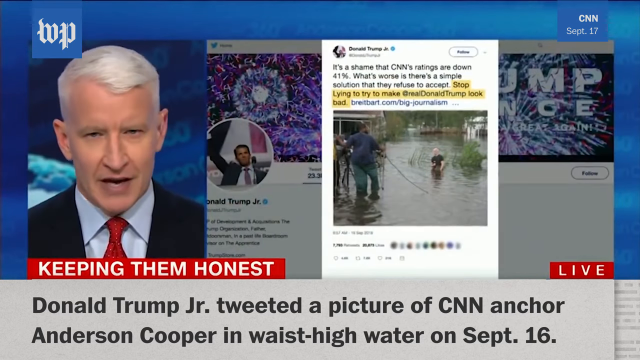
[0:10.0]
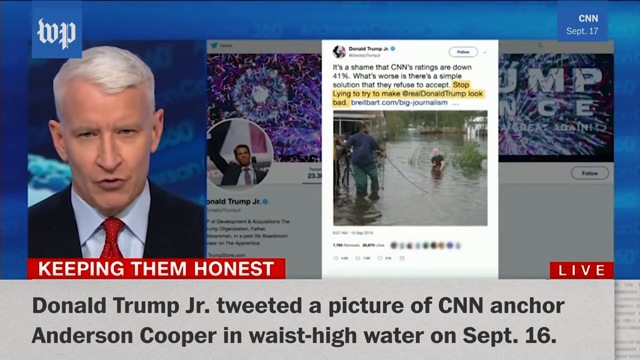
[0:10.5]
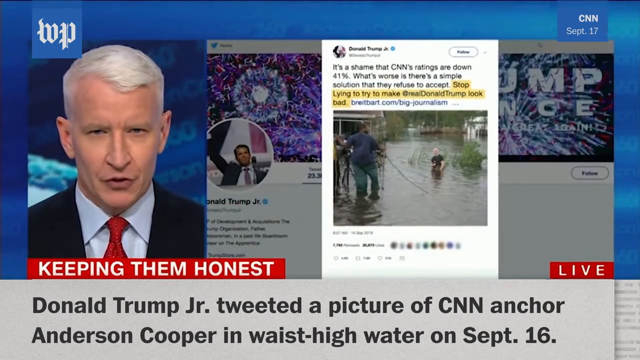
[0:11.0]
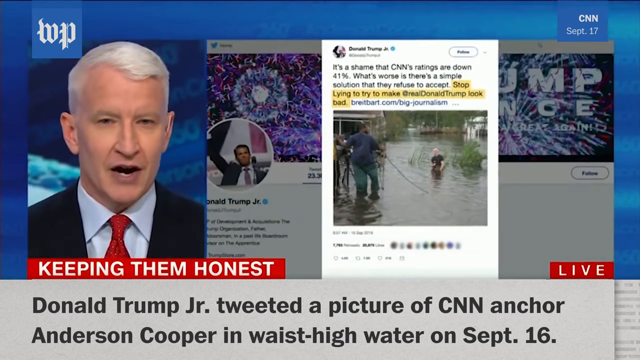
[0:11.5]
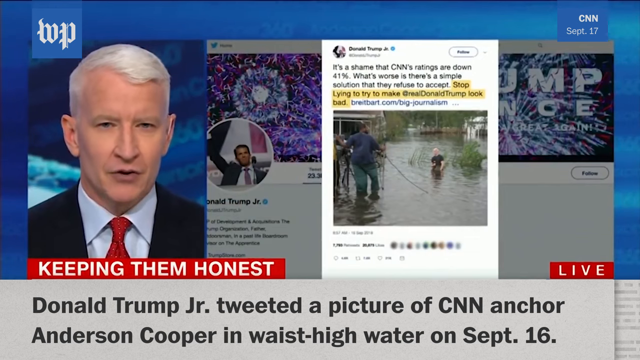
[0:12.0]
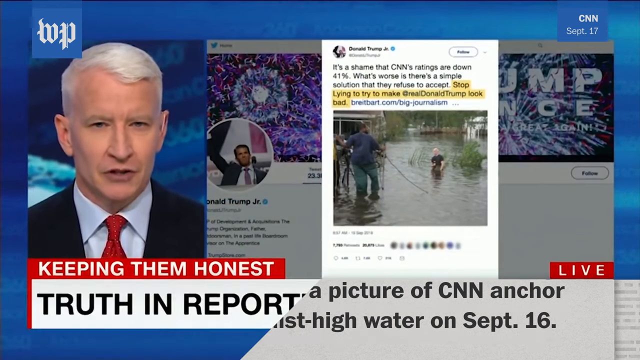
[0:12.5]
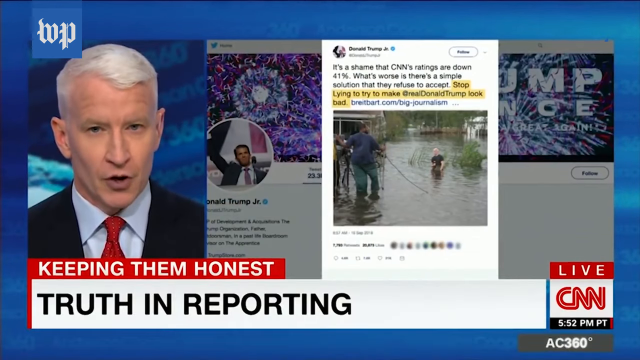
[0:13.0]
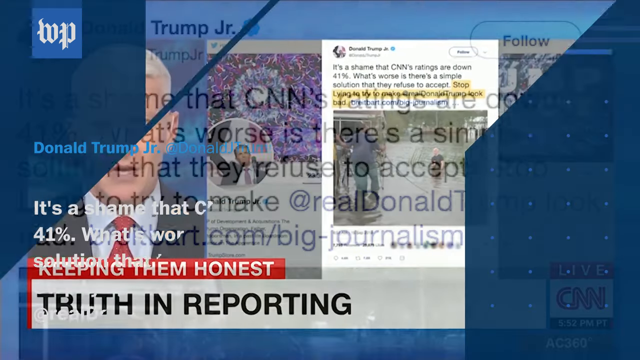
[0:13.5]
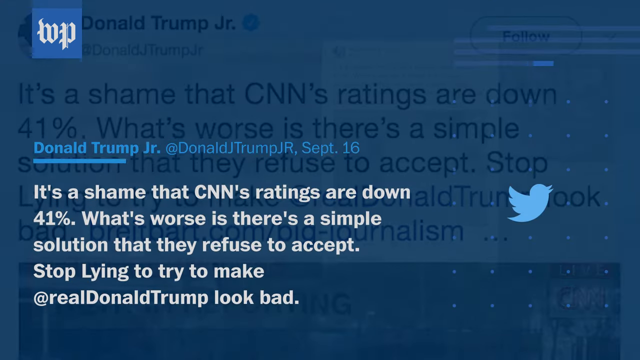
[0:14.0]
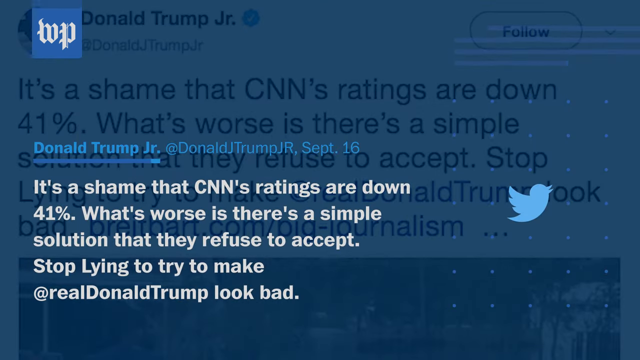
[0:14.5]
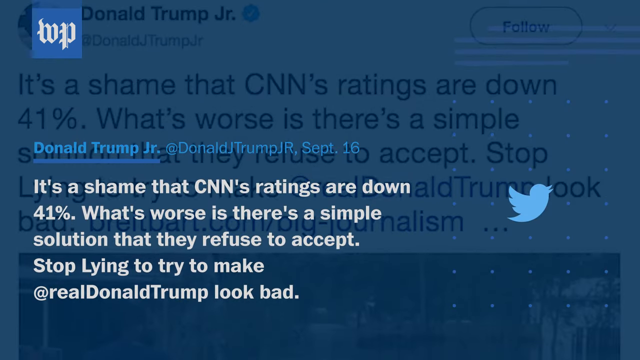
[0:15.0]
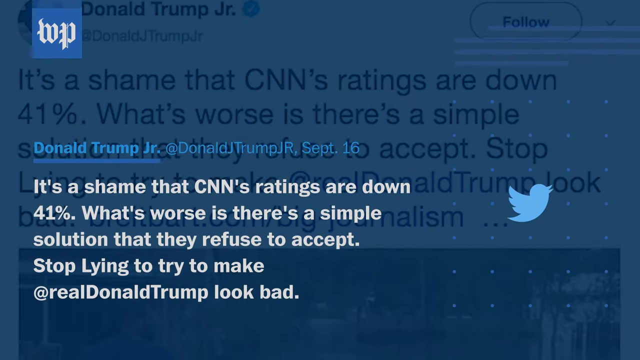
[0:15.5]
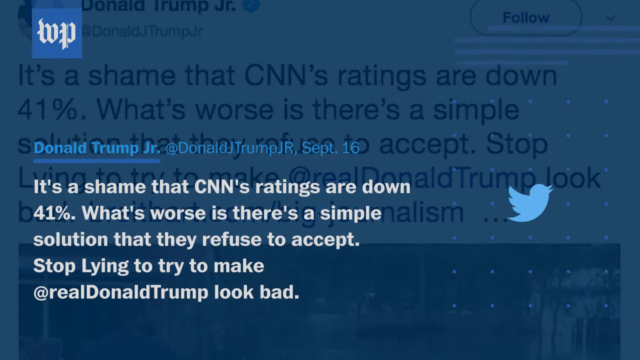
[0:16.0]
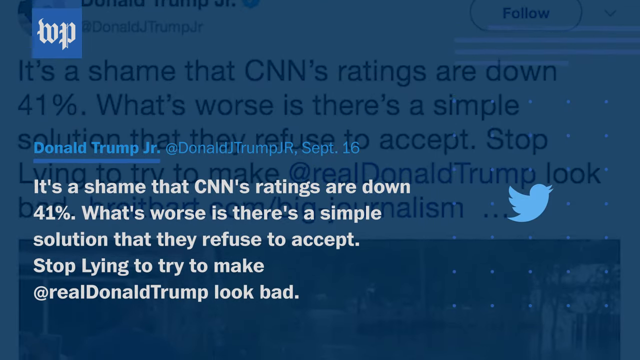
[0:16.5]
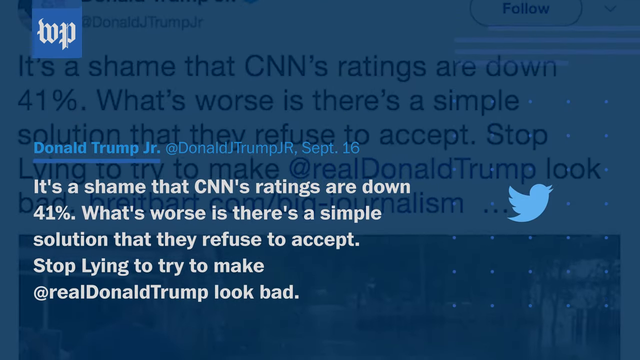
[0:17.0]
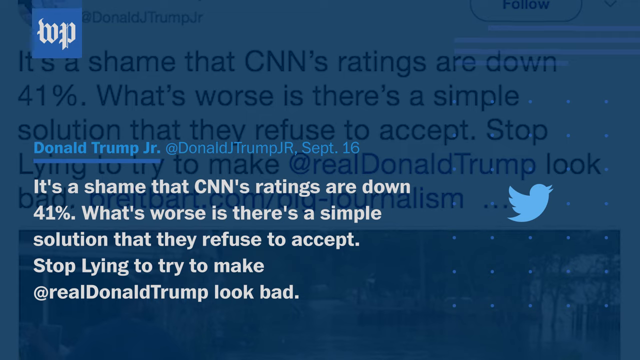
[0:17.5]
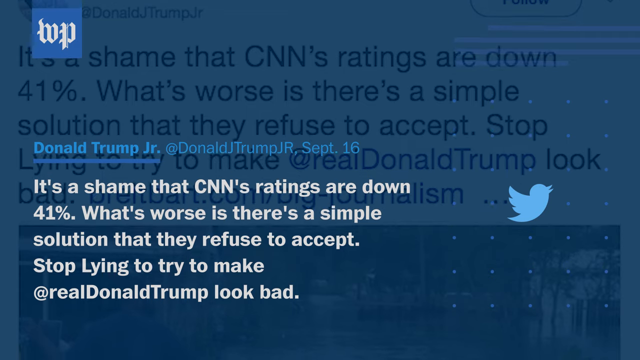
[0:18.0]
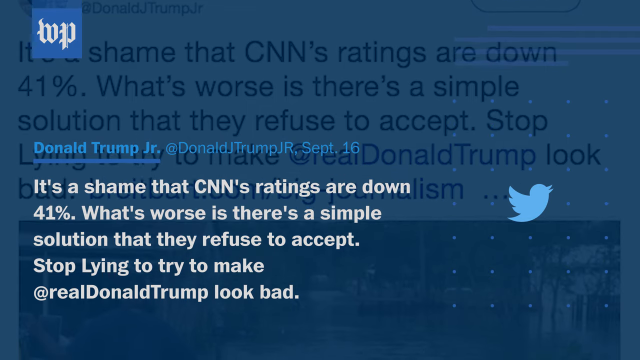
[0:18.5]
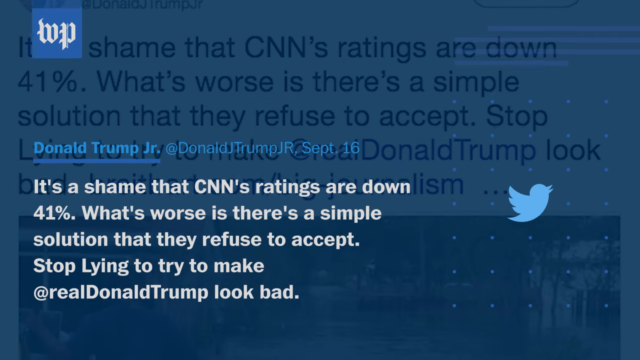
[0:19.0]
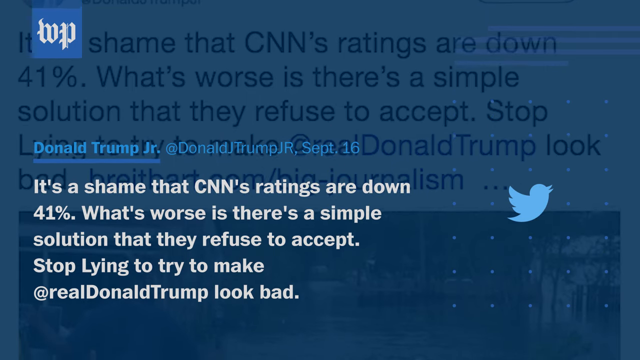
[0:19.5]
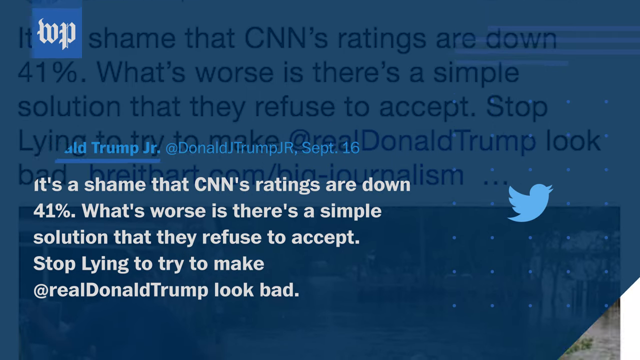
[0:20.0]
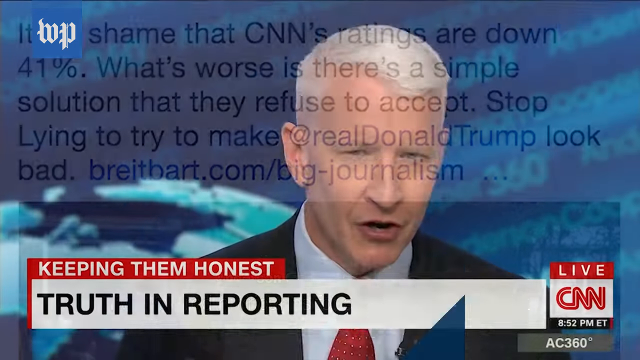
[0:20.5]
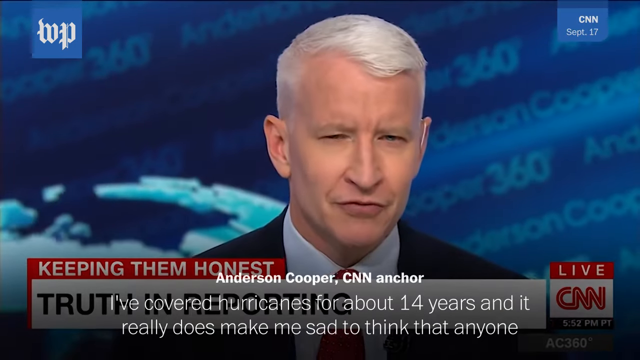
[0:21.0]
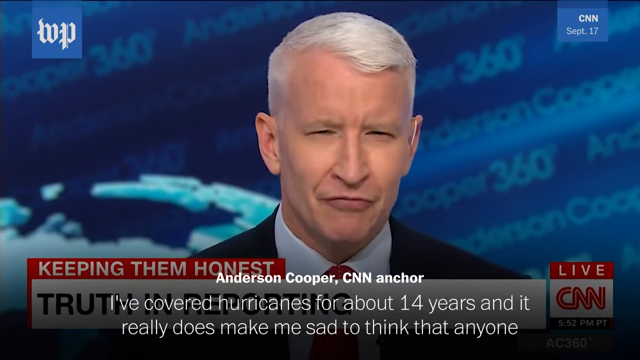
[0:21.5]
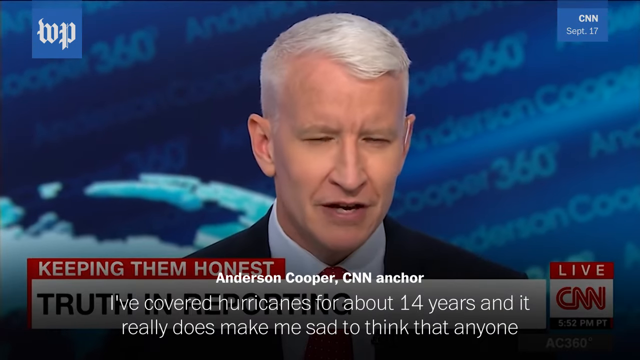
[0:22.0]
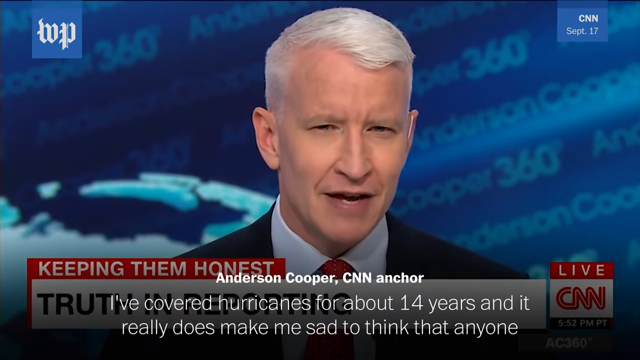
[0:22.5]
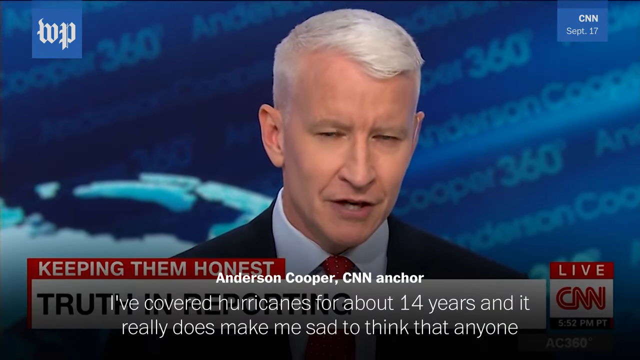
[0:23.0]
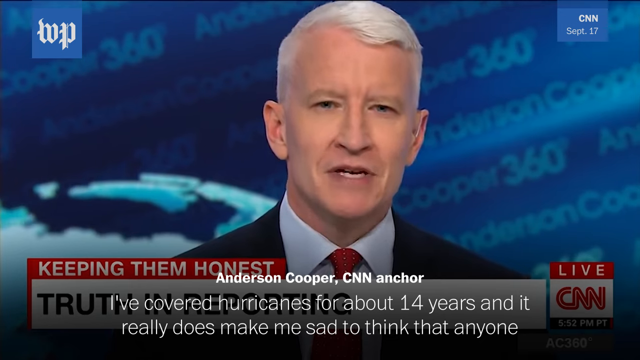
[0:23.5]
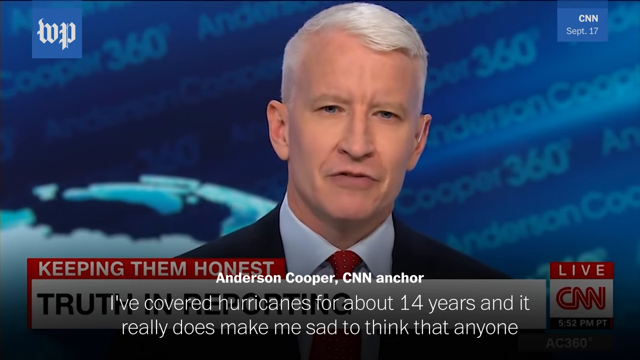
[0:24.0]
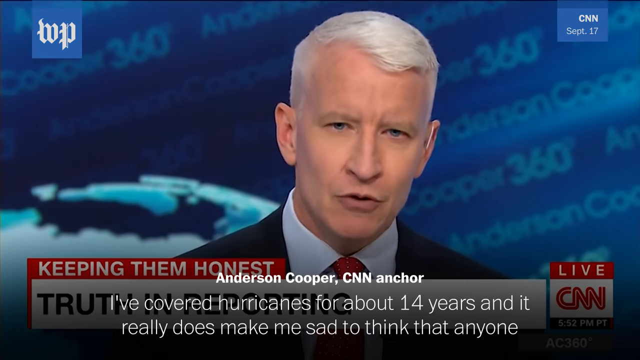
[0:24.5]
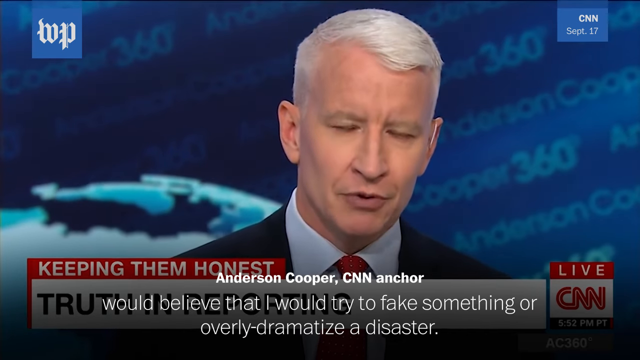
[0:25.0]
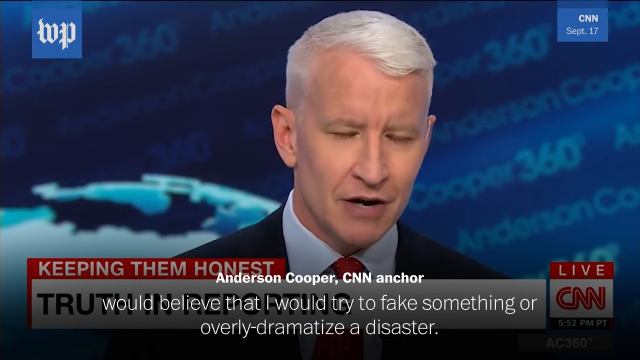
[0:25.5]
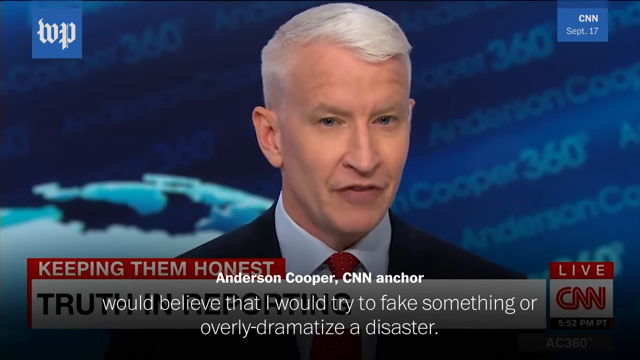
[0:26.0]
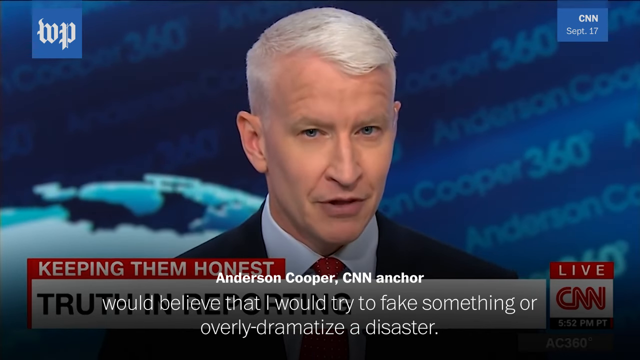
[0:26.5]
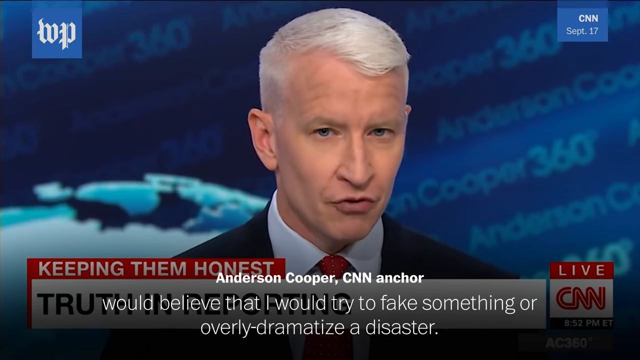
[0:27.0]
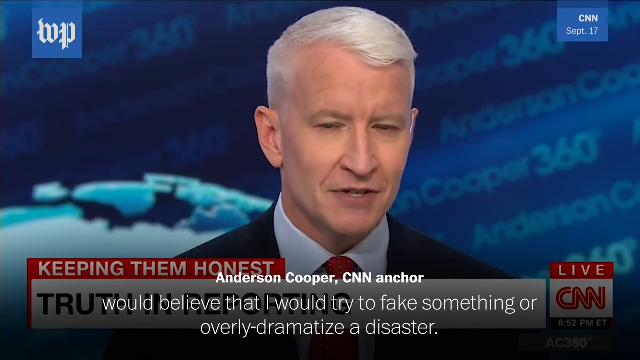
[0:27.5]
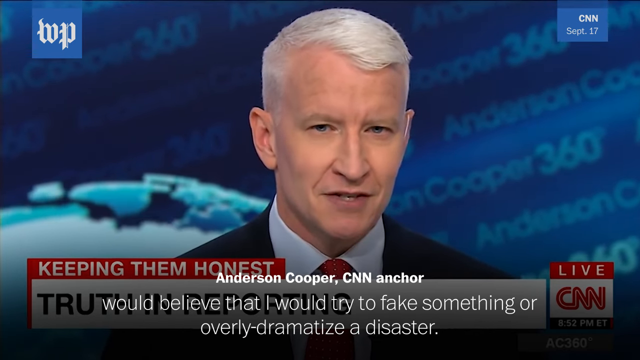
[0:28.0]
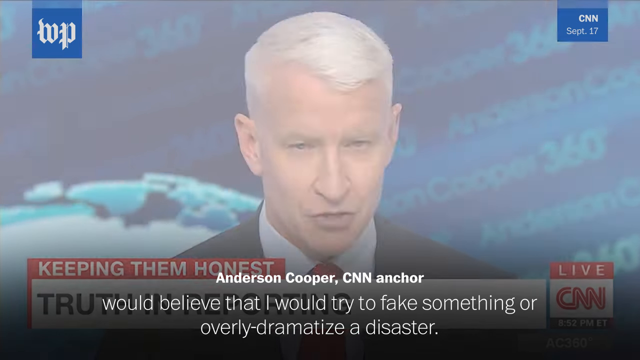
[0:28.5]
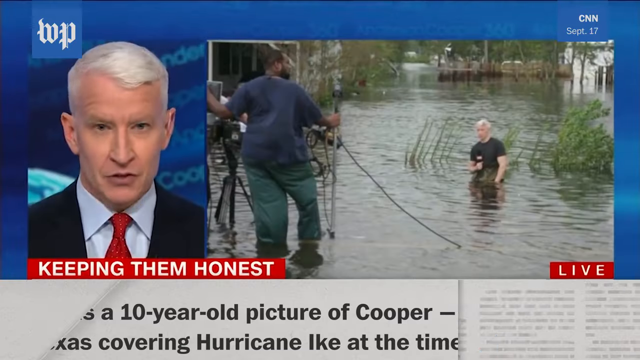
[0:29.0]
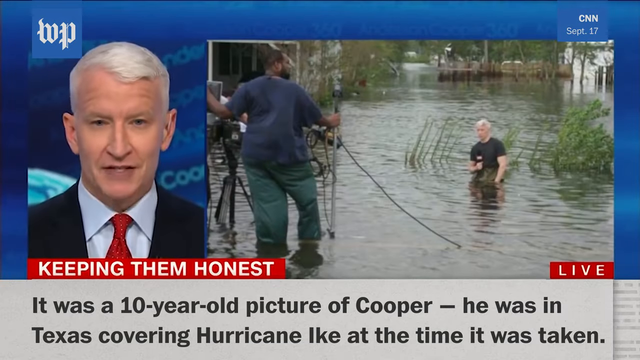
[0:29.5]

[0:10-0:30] Anderson Cooper continues to appear, with a Twitter post shown in the background along with a sort of flood image of Cooper and the words "truth in reporting." The view changes to a Twitter page with a post by Donald J. Trump that begins "it's a shame that CNN's ratings are down 41%" and mentions that they're refusing to stop lying to try to make him look bad. The video then returns to Anderson Cooper in a black suit, with white text that includes the words "overly dramatized disaster." CNN footage shows him in a flood area, and the segment ends showing only Anderson Cooper in a sort of flood-like area.